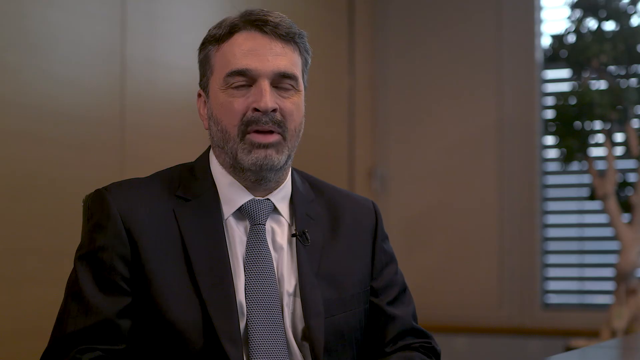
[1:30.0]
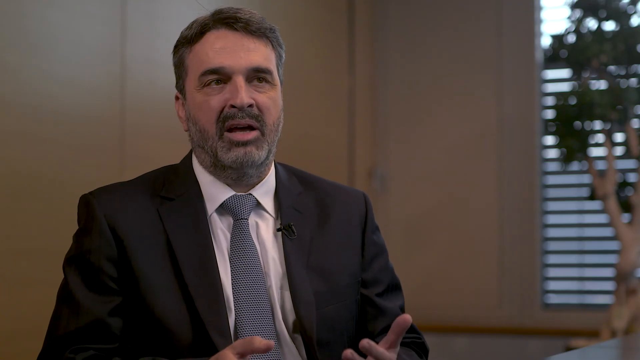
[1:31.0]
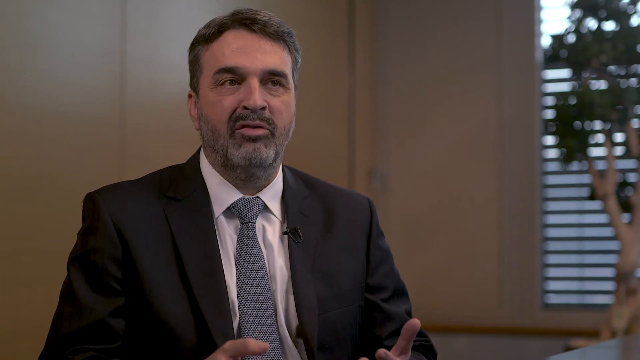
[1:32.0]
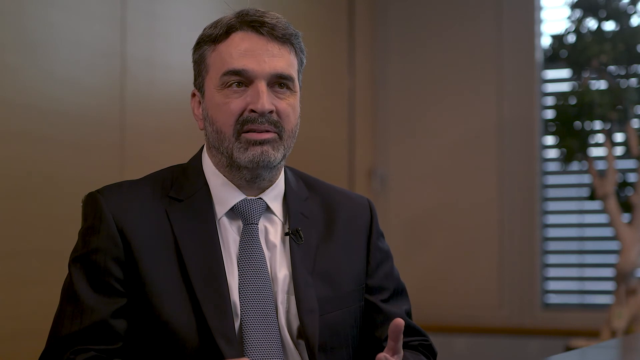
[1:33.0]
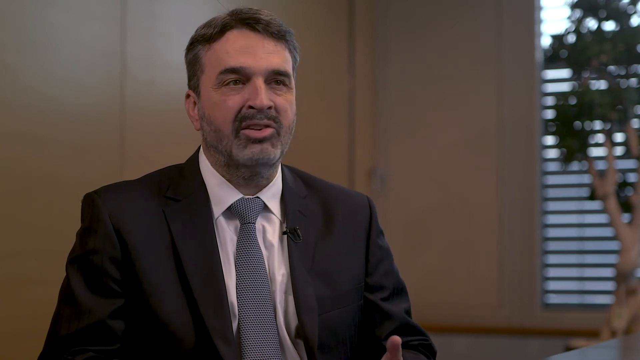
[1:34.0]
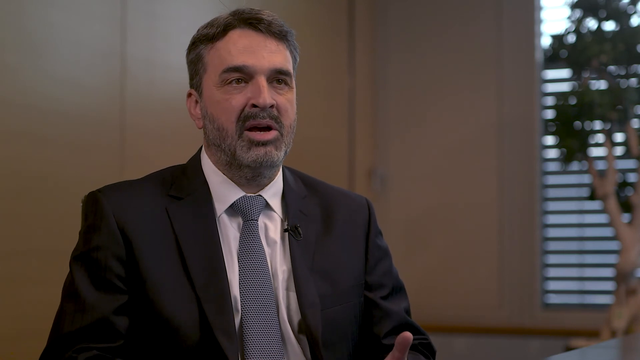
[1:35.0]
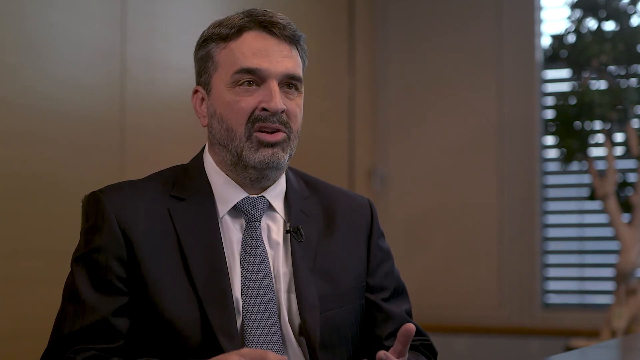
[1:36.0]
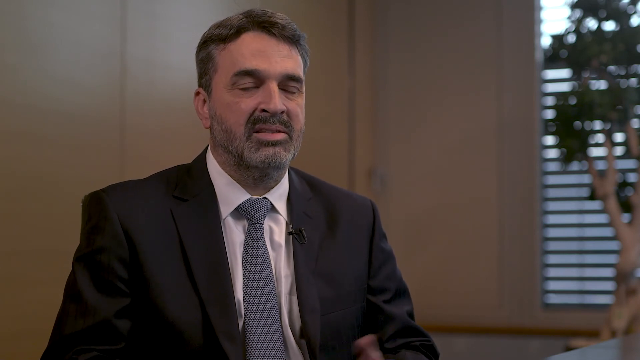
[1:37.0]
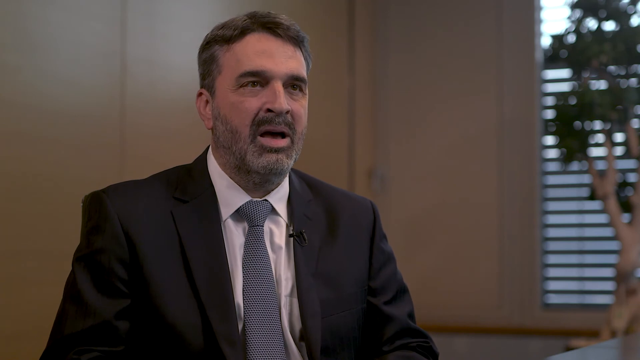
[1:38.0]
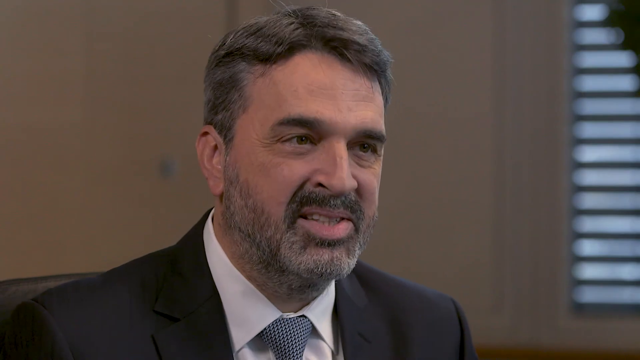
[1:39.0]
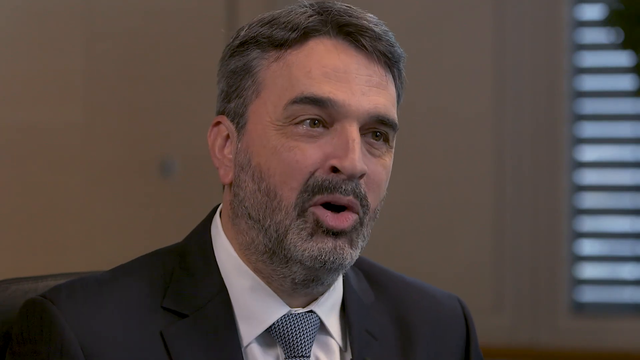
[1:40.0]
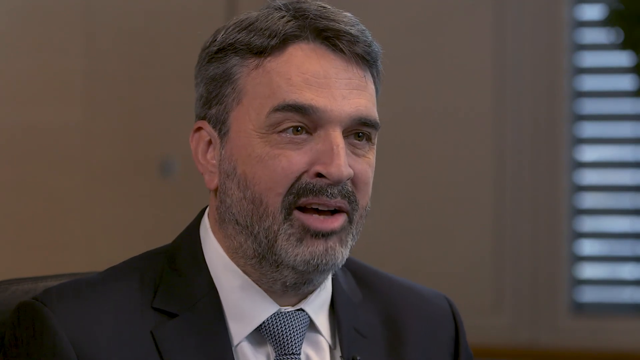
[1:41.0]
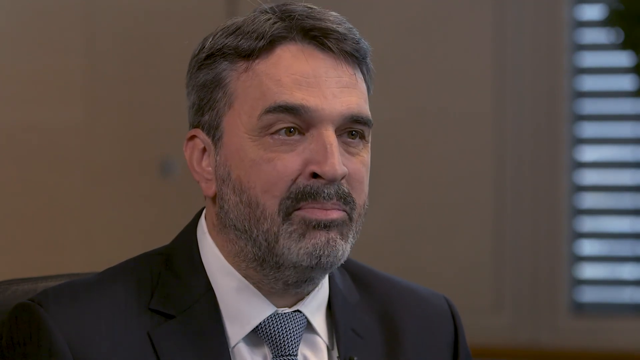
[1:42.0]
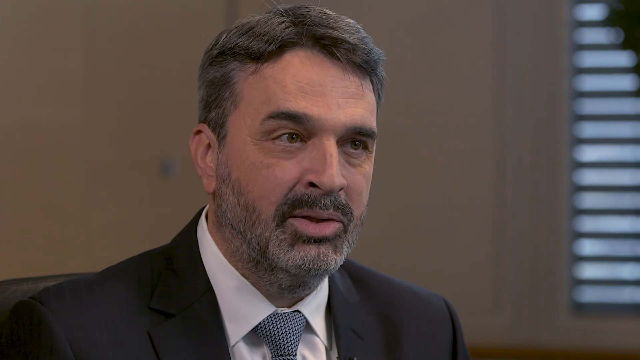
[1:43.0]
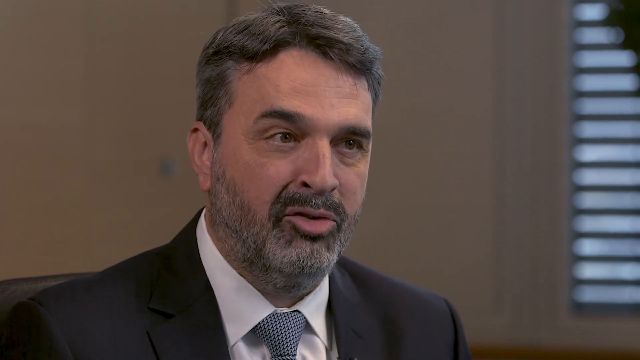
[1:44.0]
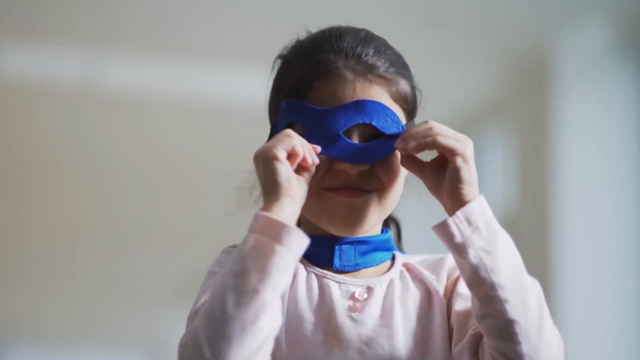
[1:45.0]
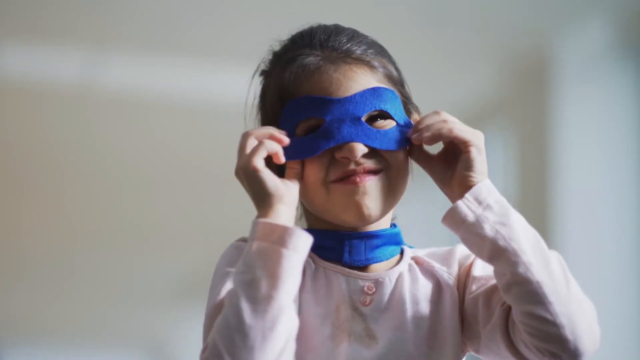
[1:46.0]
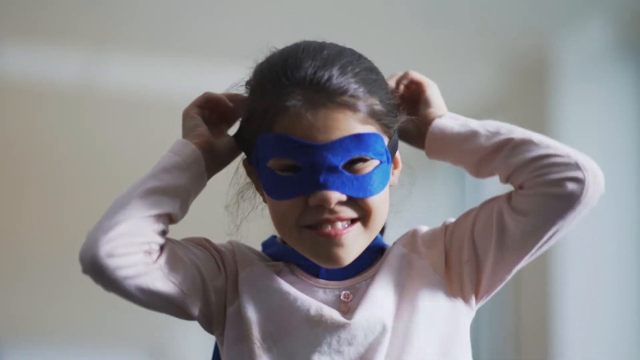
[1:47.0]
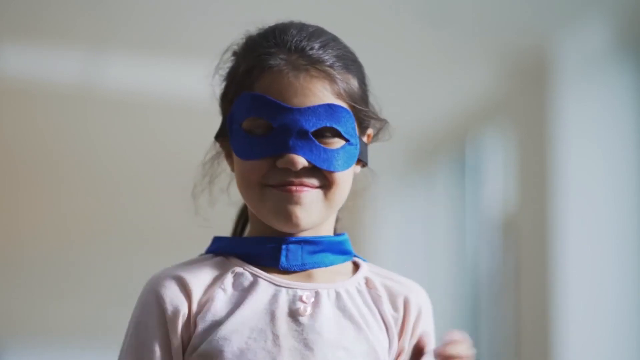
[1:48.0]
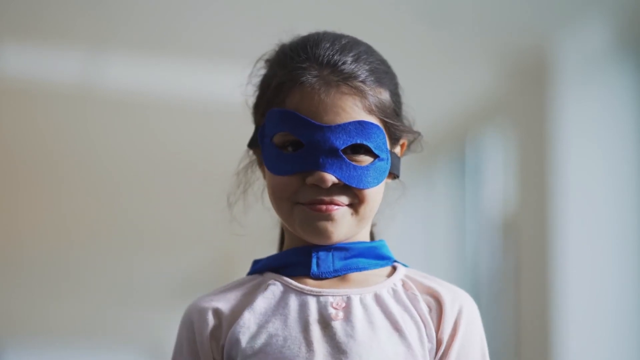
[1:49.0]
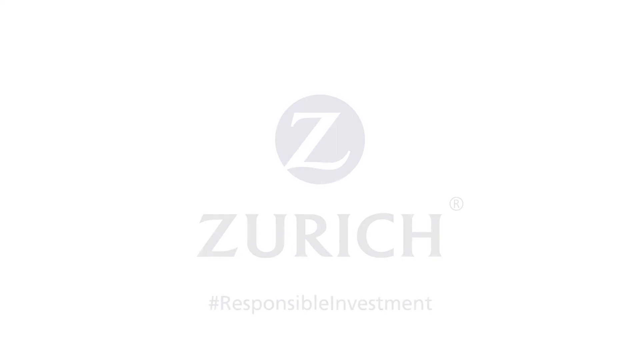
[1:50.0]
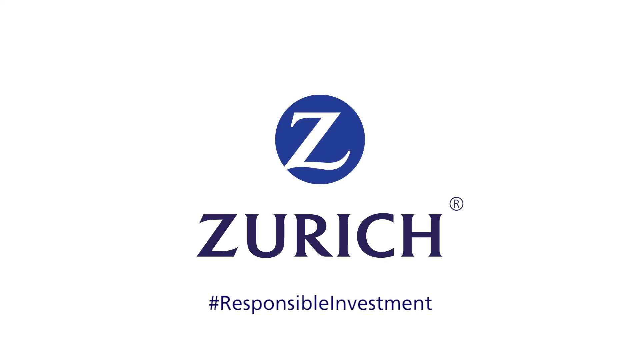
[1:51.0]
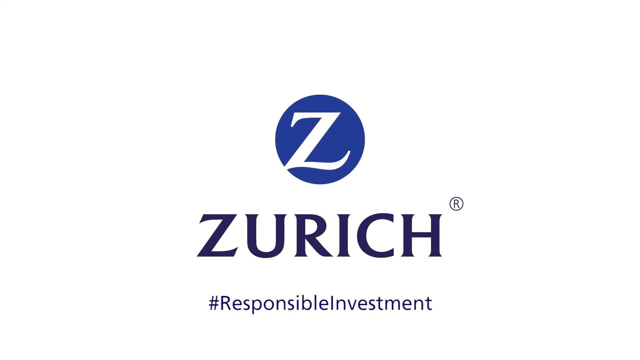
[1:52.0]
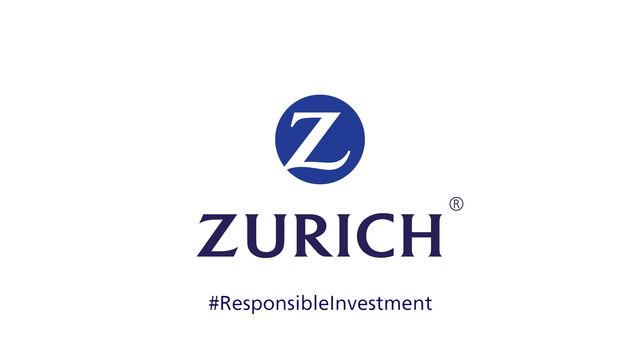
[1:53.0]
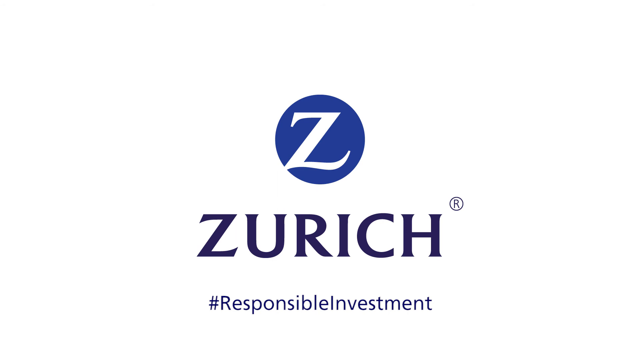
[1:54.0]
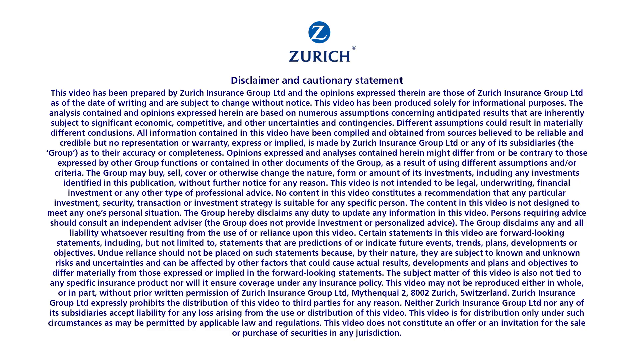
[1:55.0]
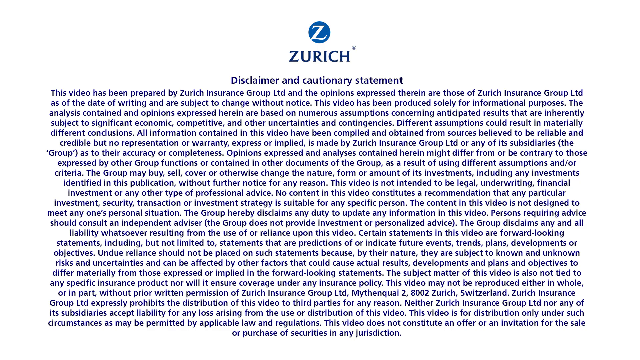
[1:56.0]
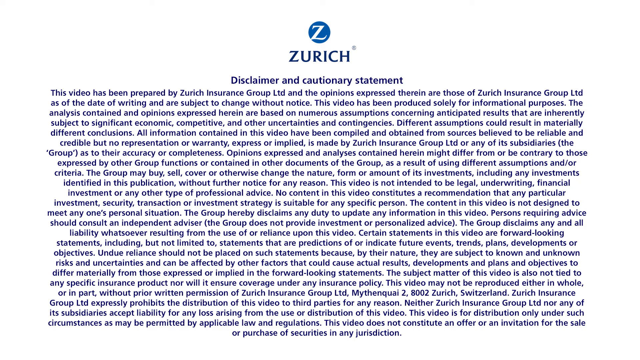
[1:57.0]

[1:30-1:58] The man is still sitting in his office being interviewed. The walls behind him appear taupe and are made up of three sections. On the right side of the frame there is a large window covered in wood blinds, and a large potted tree with a brown trunk and green leaves. The man has dark, salt-and-pepper hair, longer on top and tapered on the sides, bushy eyebrows, and a salt-and-pepper mustache and beard. He wears a white collared button-down shirt and a charcoal tie, with a microphone on his left lapel. He gestures with his left hand as he speaks, palm up, making a small circular motion. Next, a little girl enters the screen. She has dark hair pulled back in a ponytail, a blue mask around her eyes, a blue scarf around her neck and a long-sleeve shirt. Smiling, she pulls her mask down over her ears with both hands, using her forefingers and thumbs. Finally, the Zurich logo appears in the middle of the screen: a violet circle with a white Z inside, "Zurich" written underneath in violet, and "#responsibleinvestment" beneath that.